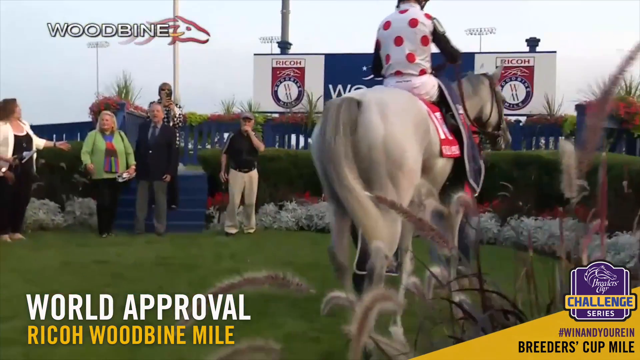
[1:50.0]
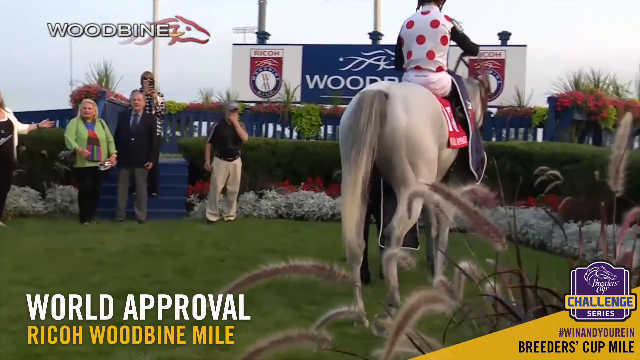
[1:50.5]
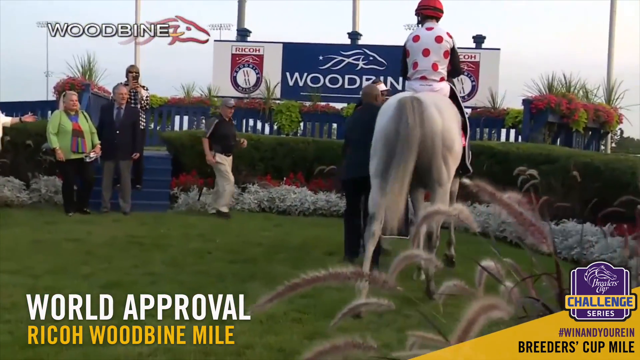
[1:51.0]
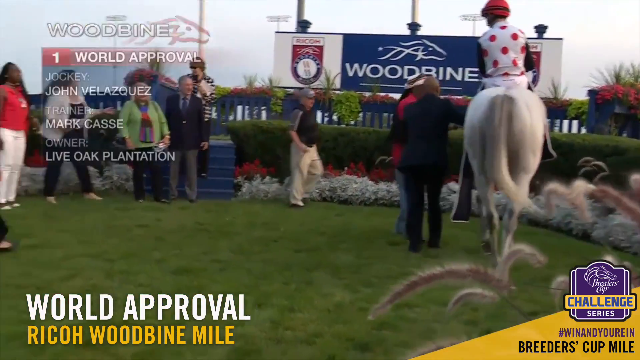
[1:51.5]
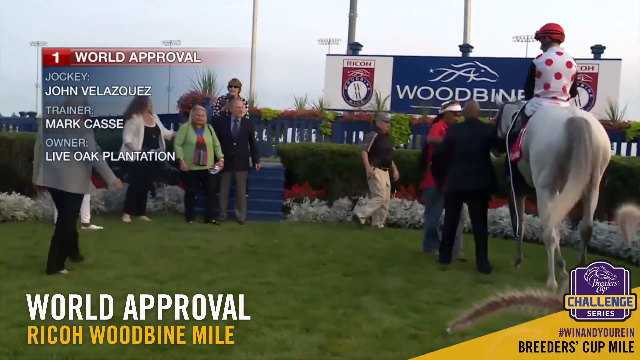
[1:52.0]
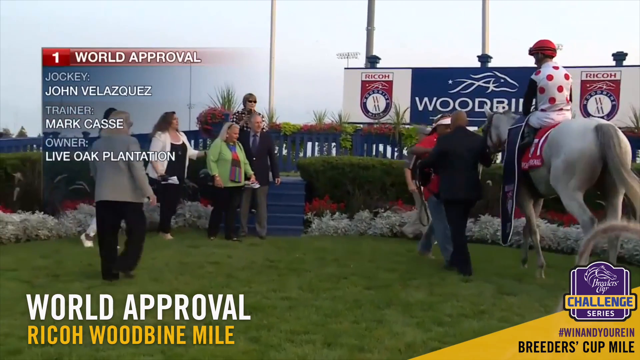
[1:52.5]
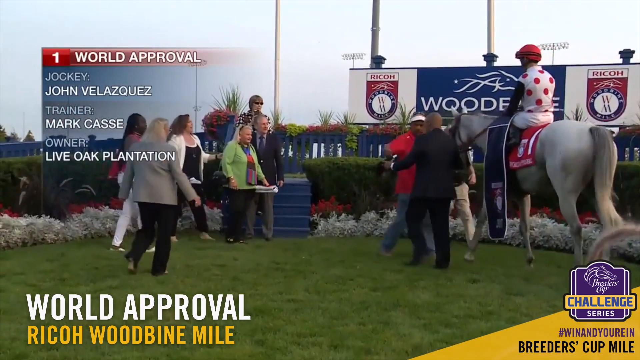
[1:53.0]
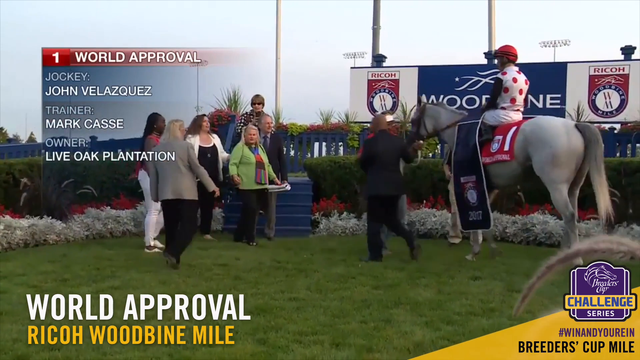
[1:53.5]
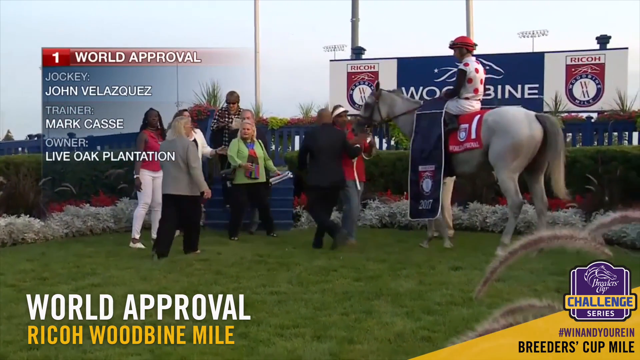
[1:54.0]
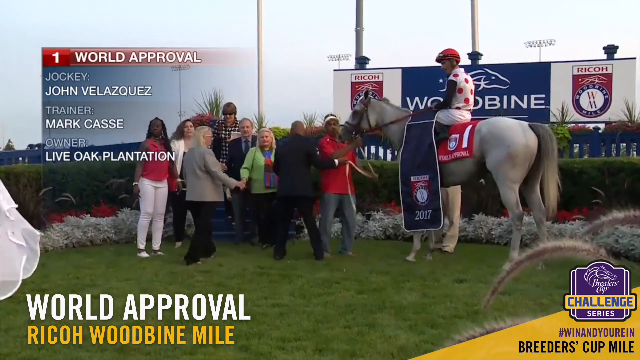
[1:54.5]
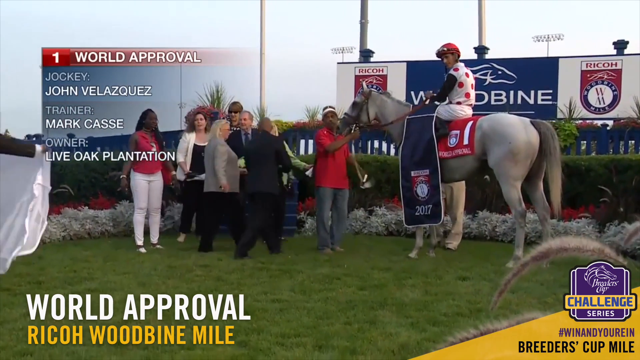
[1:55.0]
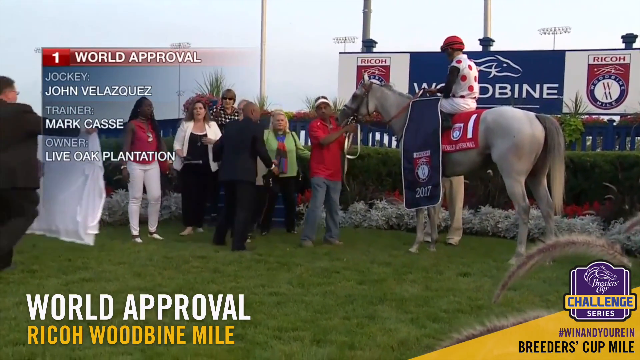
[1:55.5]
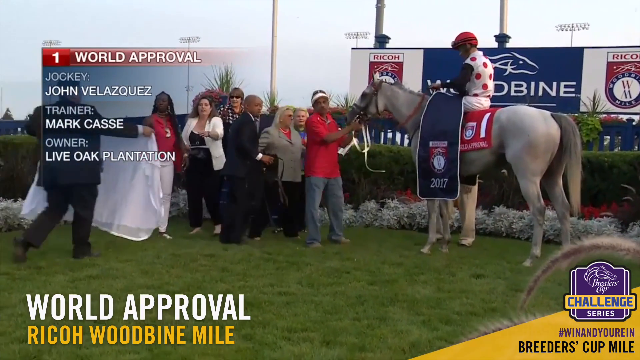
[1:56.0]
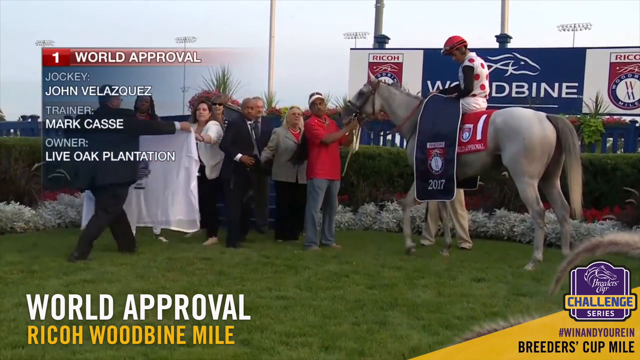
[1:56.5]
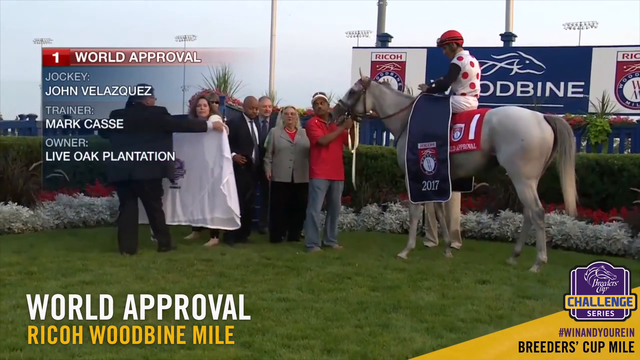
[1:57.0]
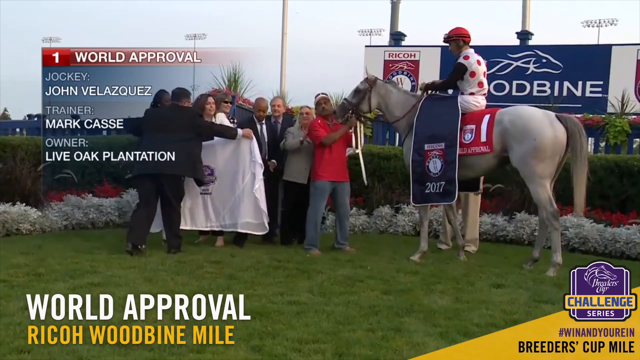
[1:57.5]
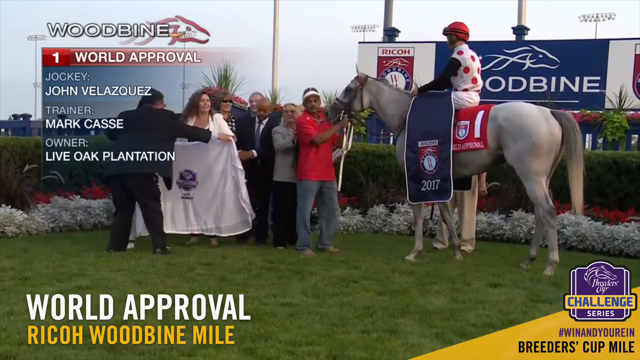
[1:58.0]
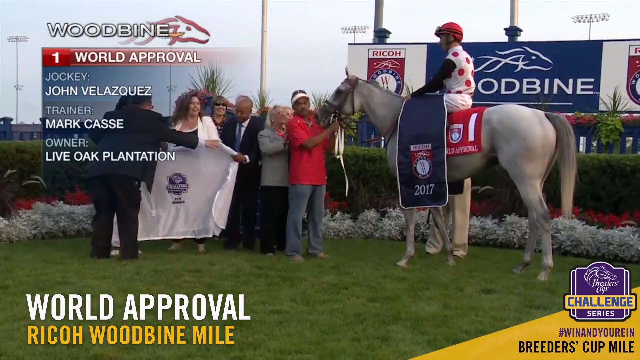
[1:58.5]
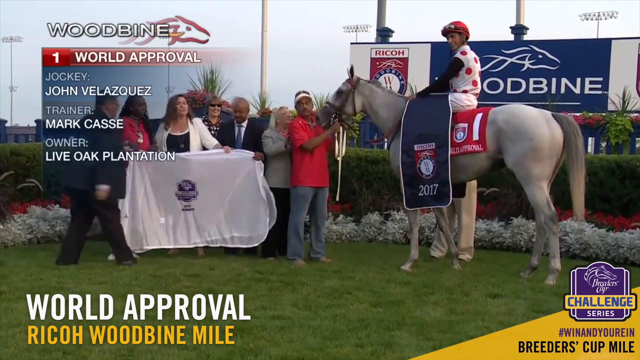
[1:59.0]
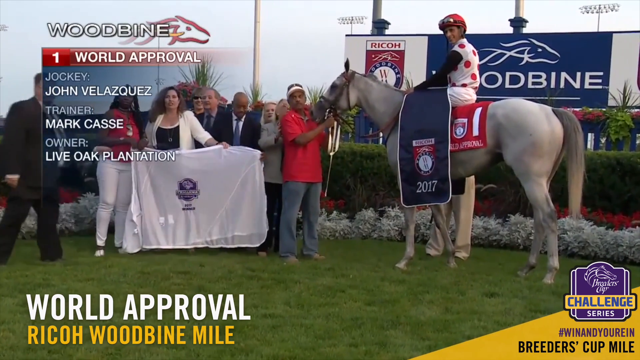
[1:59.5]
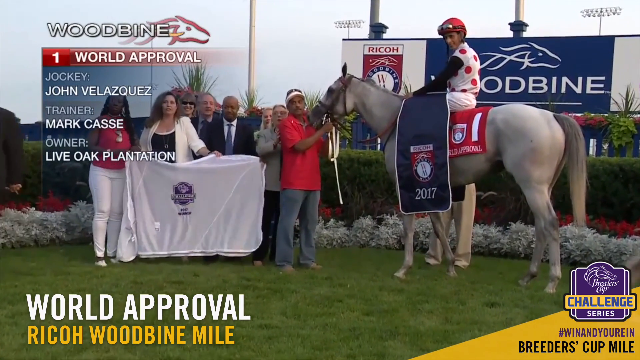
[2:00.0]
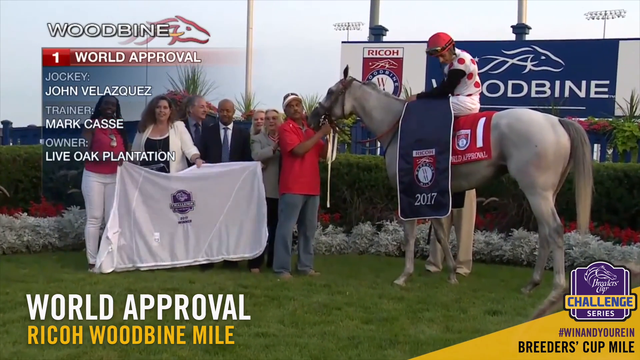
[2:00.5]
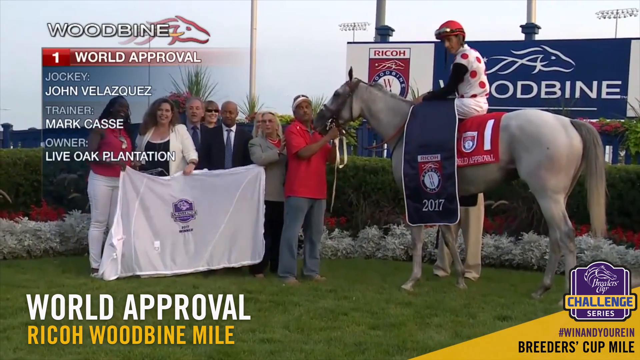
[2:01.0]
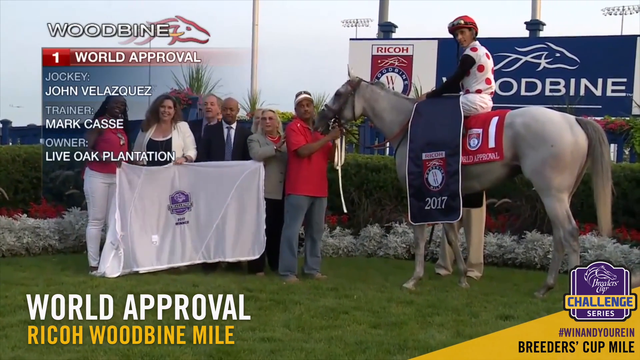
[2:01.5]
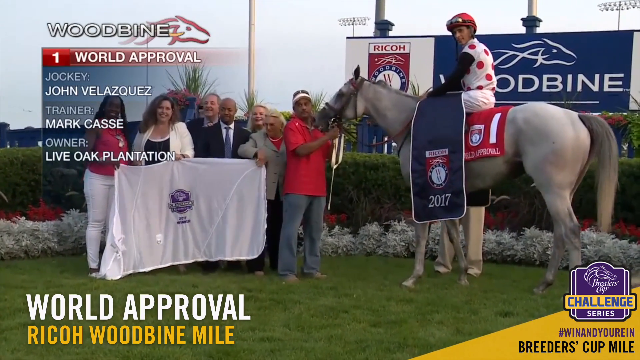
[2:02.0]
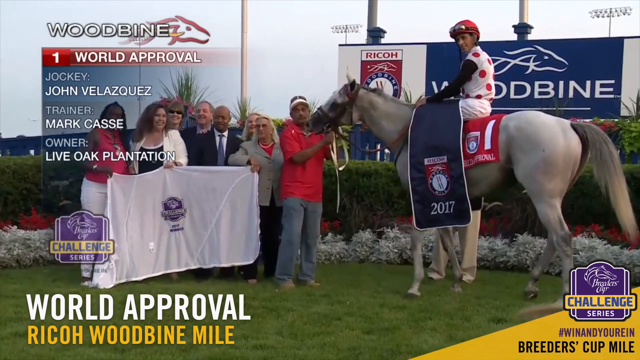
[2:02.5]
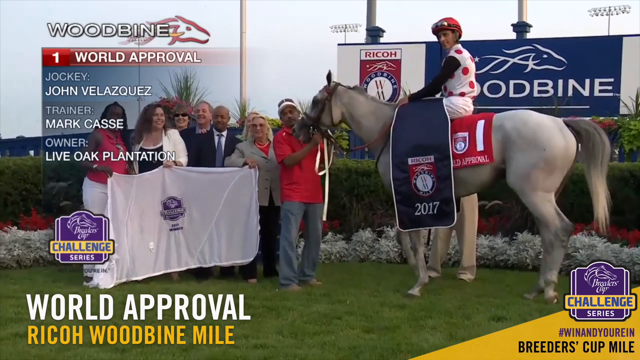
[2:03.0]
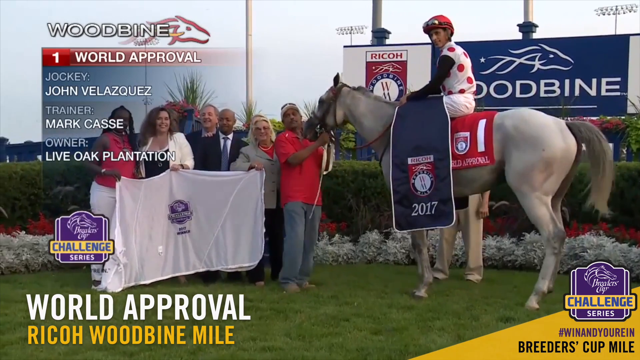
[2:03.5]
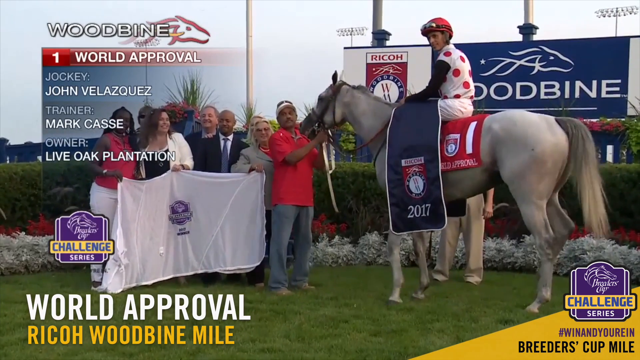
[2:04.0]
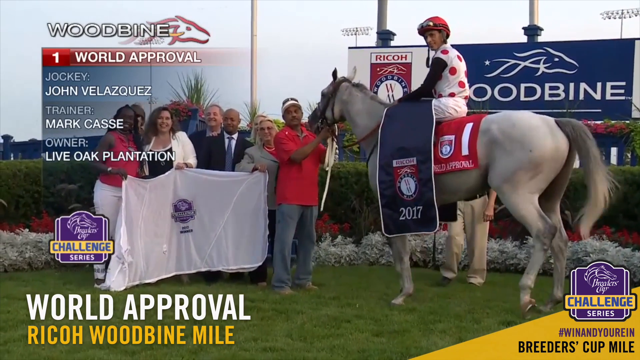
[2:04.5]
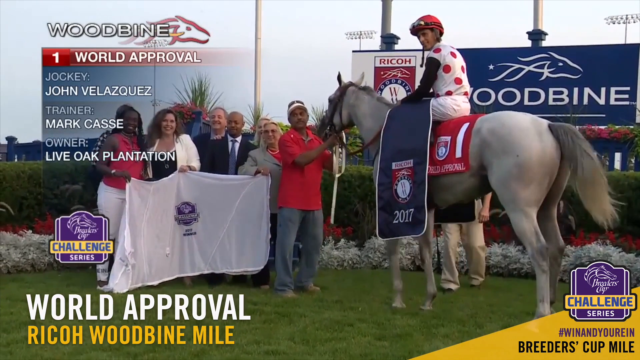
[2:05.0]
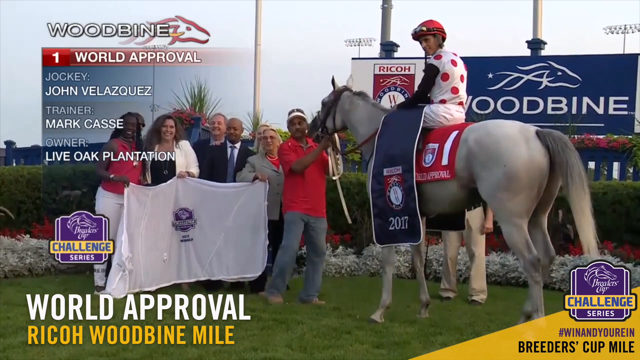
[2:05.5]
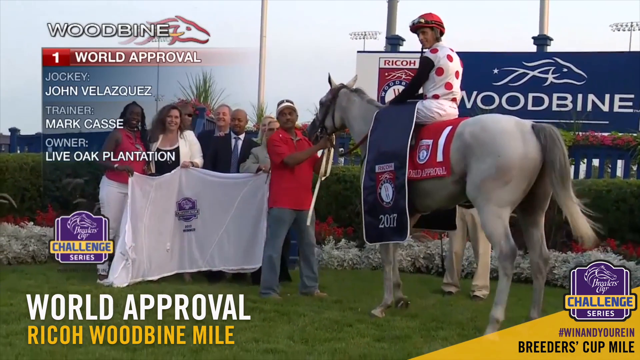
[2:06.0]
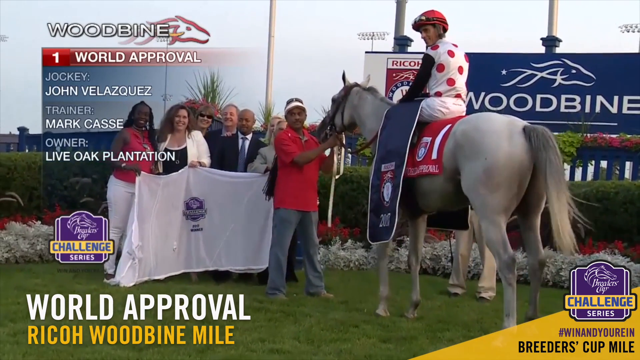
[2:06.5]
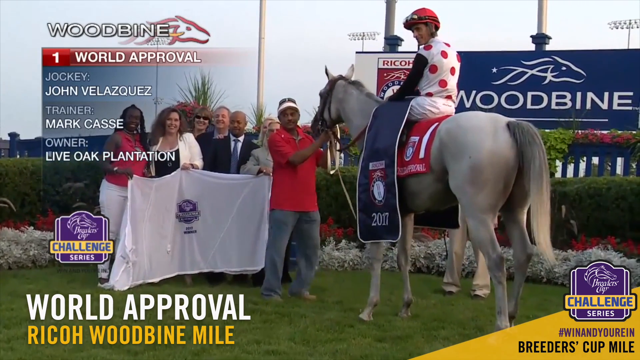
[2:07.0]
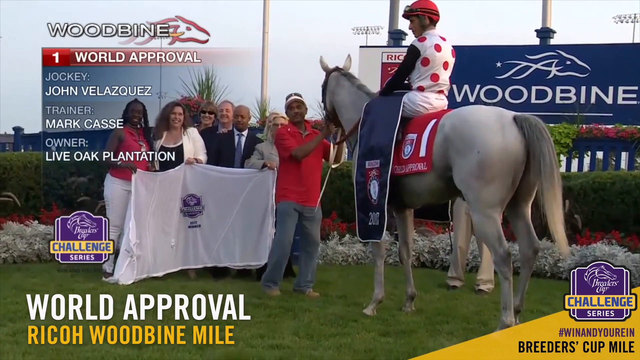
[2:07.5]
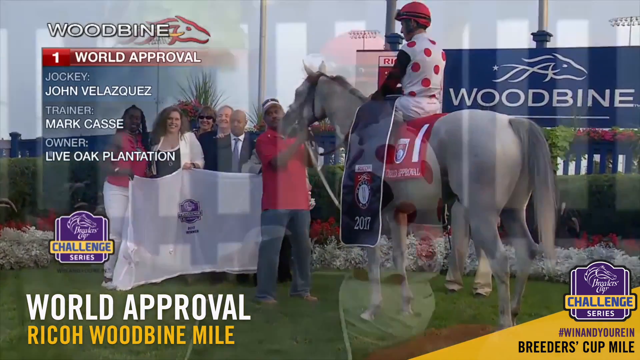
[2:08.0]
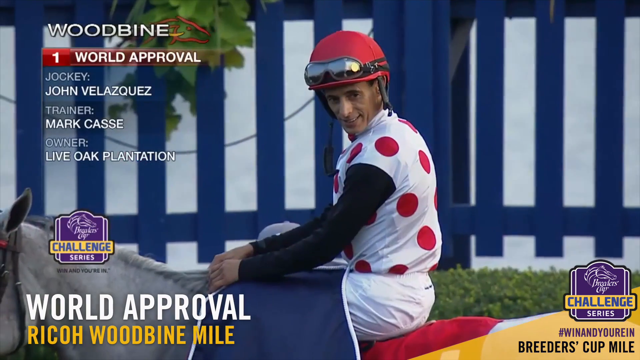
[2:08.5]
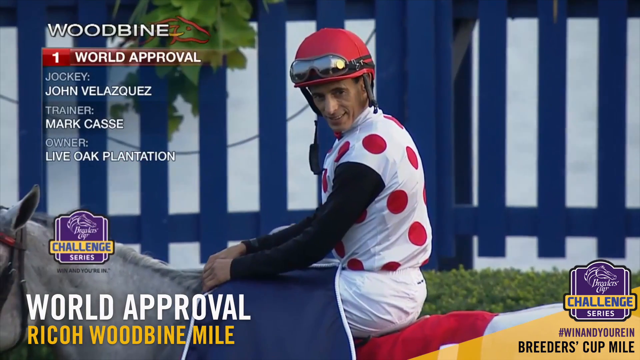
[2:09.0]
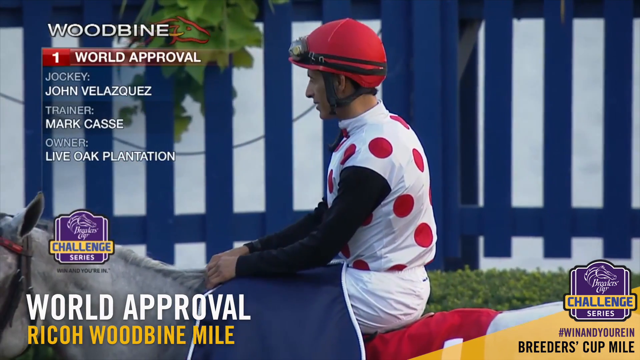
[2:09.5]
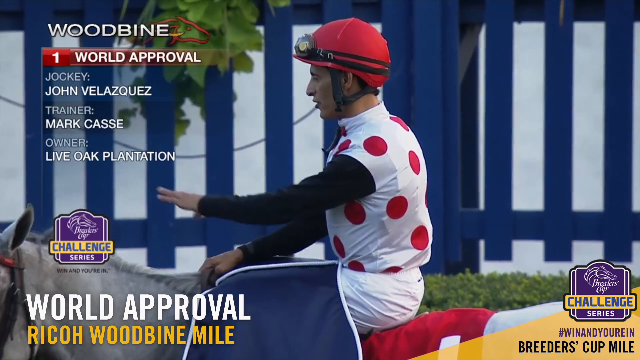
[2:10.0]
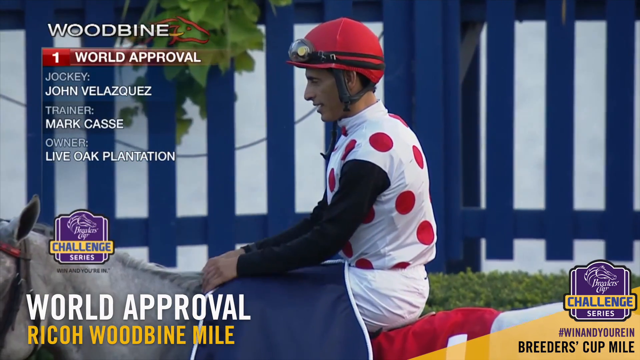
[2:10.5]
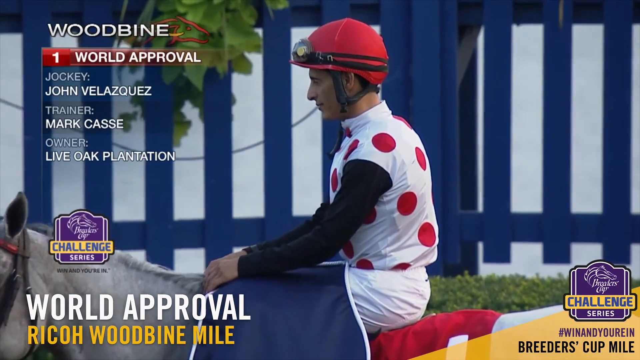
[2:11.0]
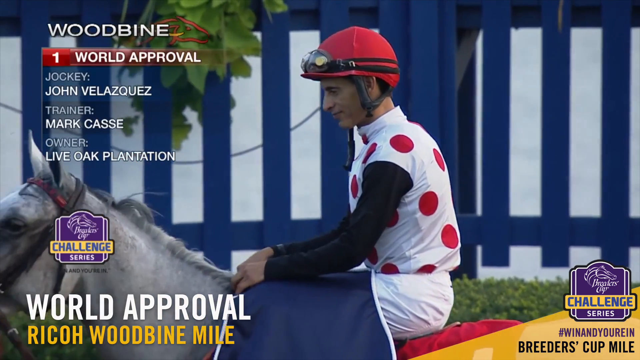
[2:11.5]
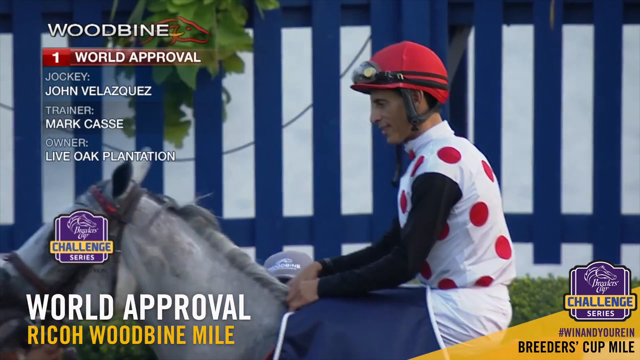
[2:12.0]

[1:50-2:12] A shot from behind the horse that ran the race shows the jockey still sat on its back. The jockey wears a white jersey over a black long-sleeved top, white bottoms, a red hat and black goggles. The horse is grey and white and is facing away. Other people are in the background, mostly on the left. A man in a red top touches the horse's mouth, and a group of people hold up a white sheet with a purple emblem on it, which looks like it might be the same symbol as the challenge series shown at the bottom right of the screen, though it is hard to see at that size. On-screen information names the horse World Approval, the jockey John Velasquez, the trainer Mark Cass and the owner Live Oak Plantation. The horse looks very tired, while the jockey appears rather happy.